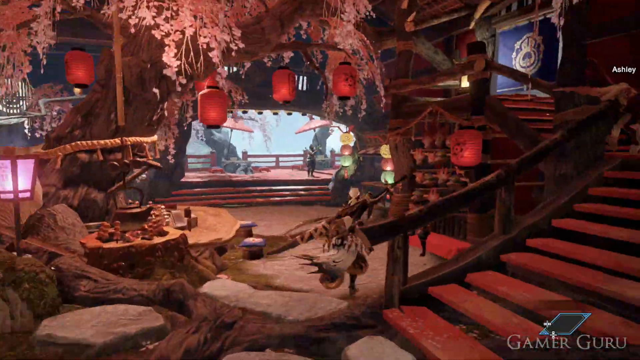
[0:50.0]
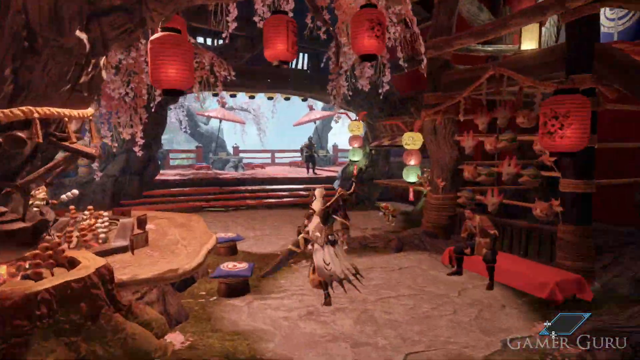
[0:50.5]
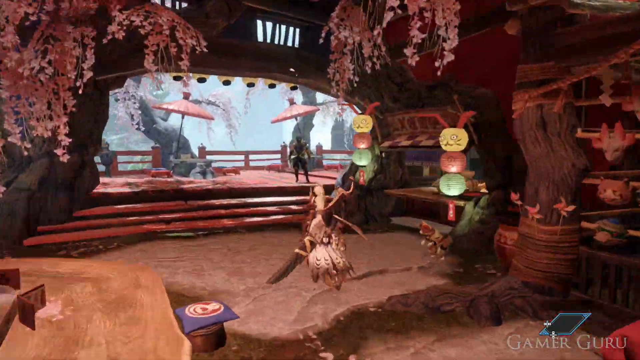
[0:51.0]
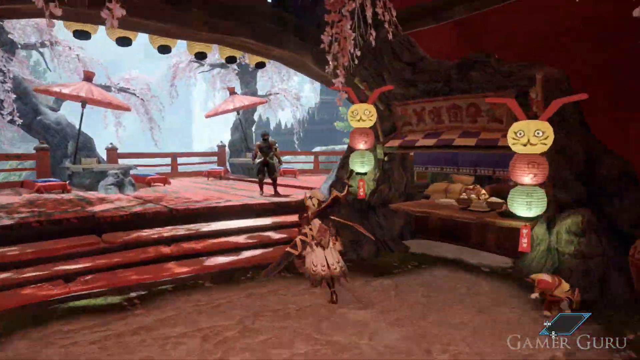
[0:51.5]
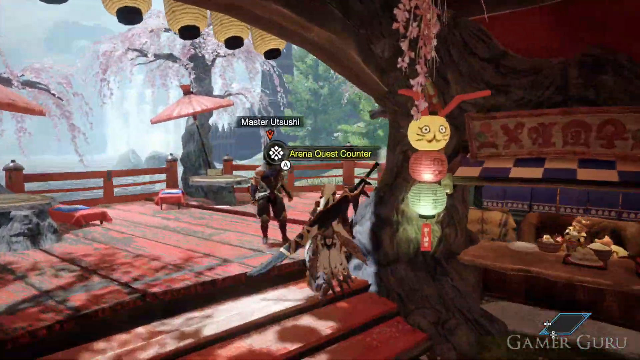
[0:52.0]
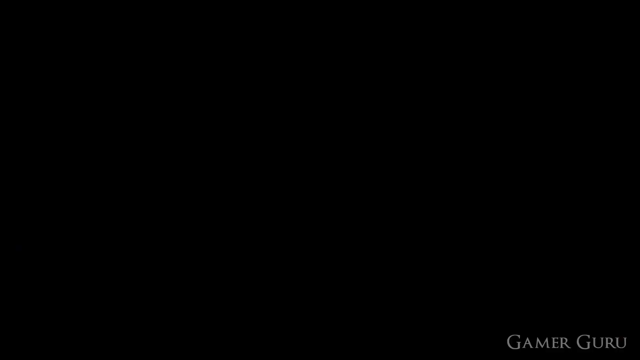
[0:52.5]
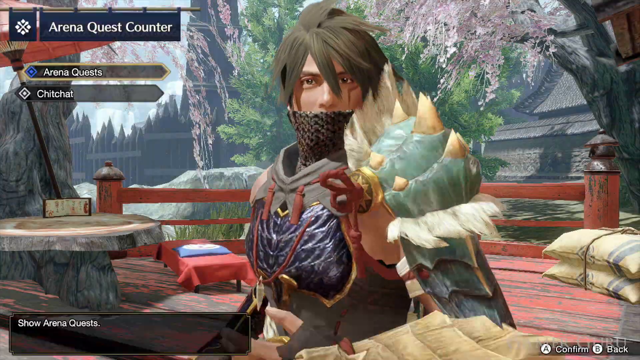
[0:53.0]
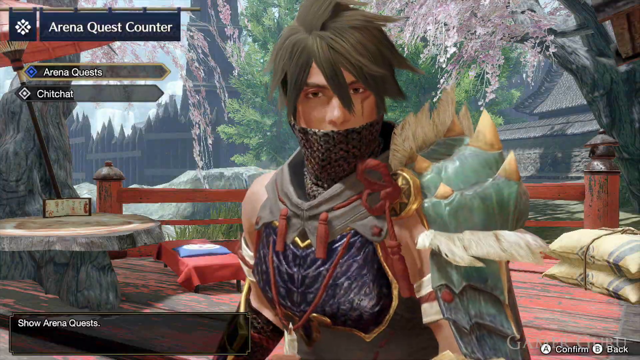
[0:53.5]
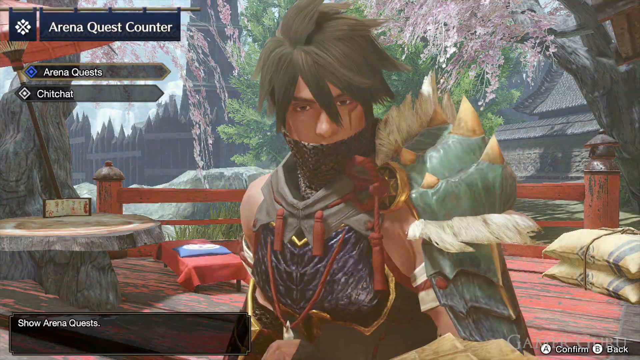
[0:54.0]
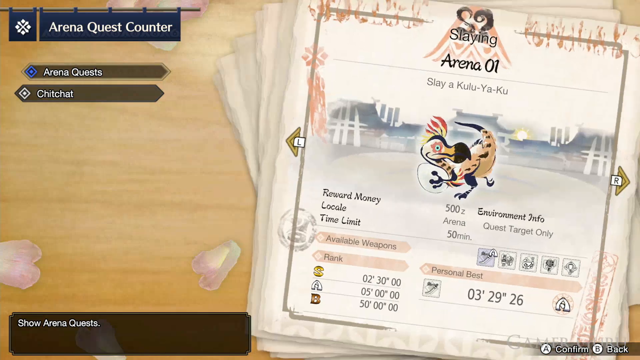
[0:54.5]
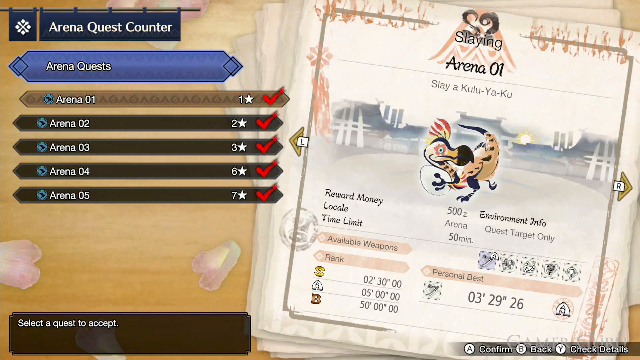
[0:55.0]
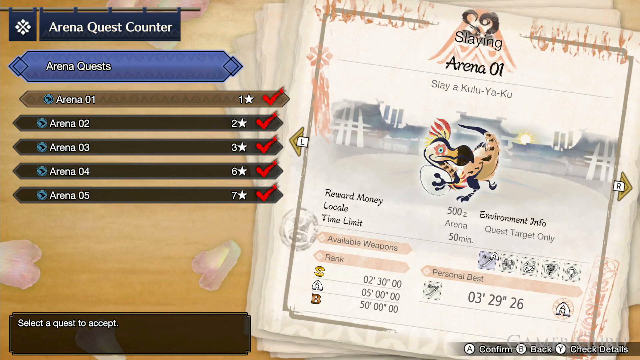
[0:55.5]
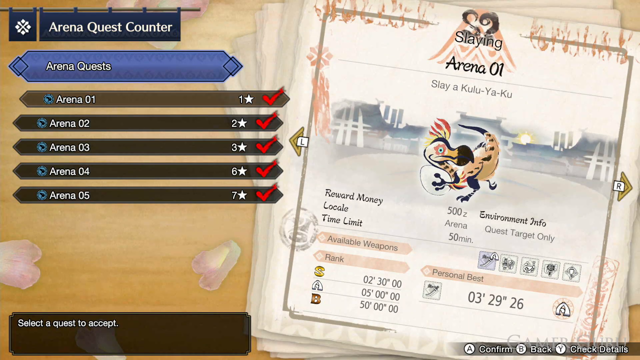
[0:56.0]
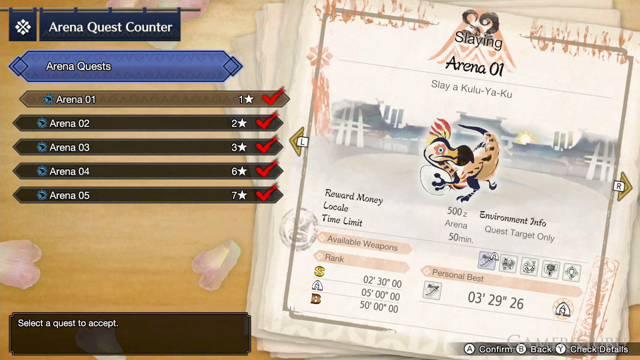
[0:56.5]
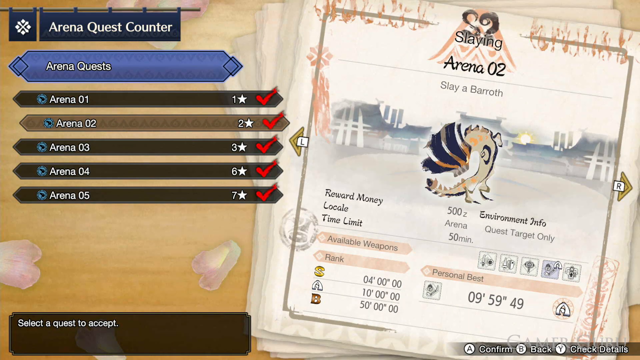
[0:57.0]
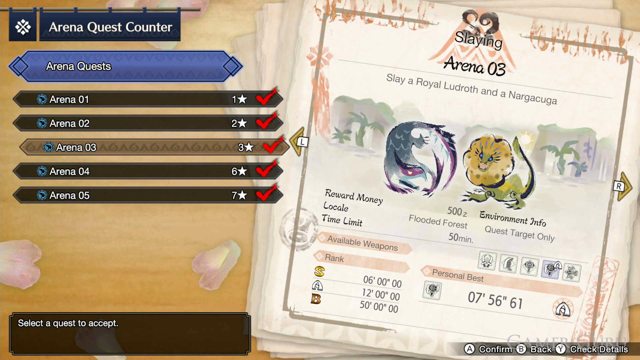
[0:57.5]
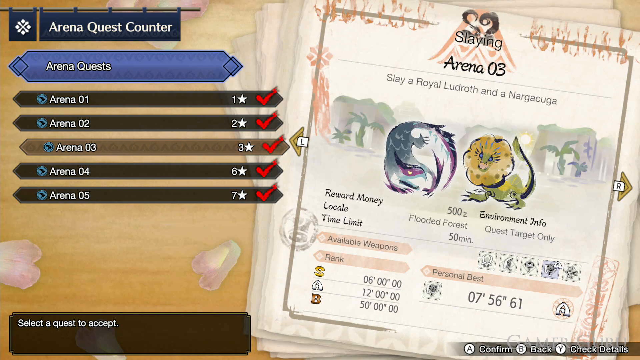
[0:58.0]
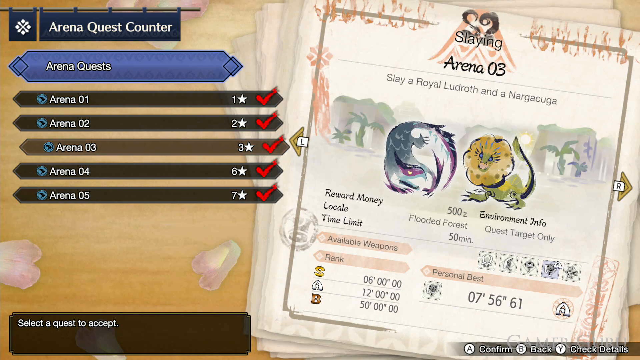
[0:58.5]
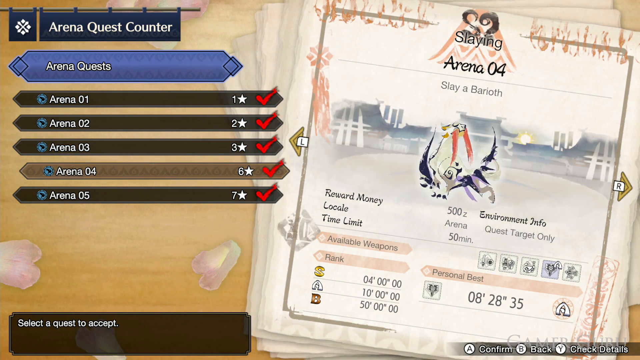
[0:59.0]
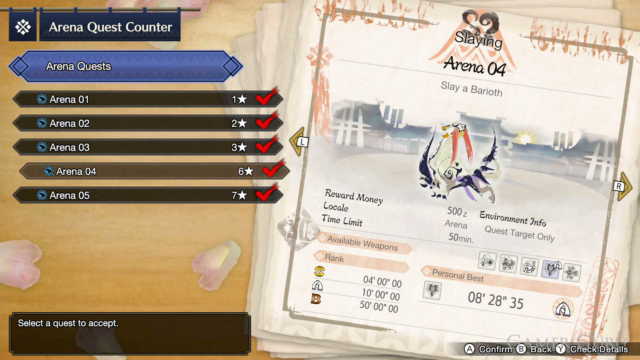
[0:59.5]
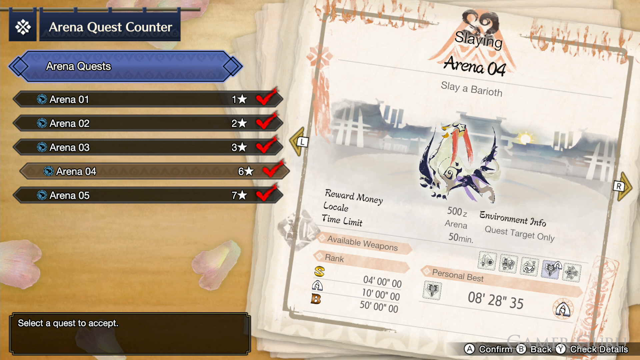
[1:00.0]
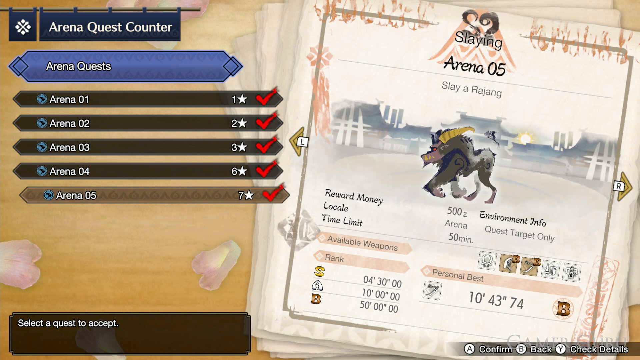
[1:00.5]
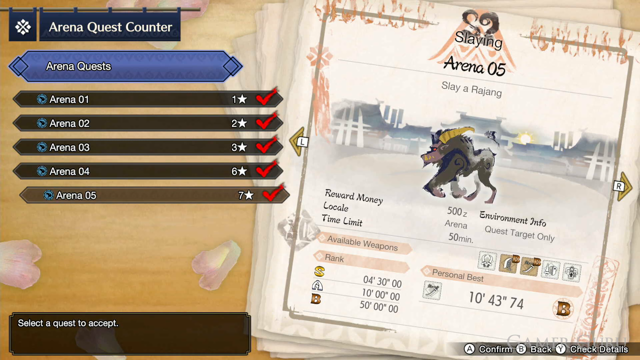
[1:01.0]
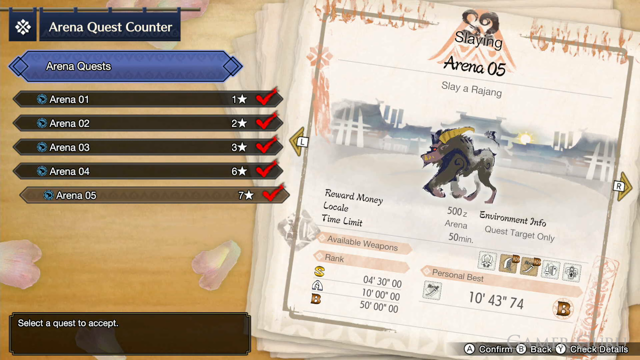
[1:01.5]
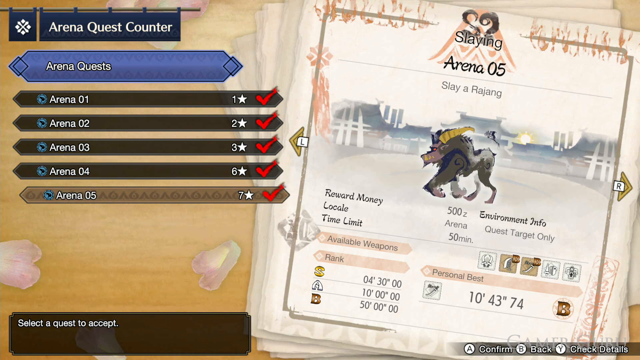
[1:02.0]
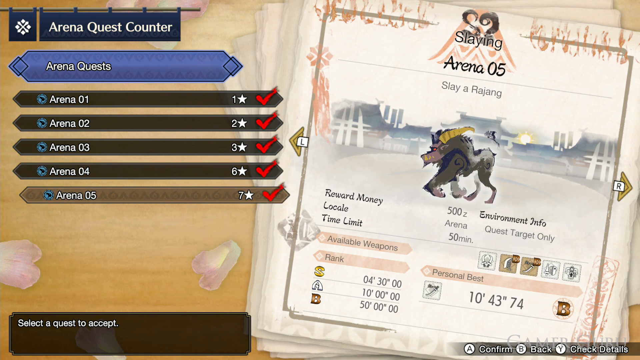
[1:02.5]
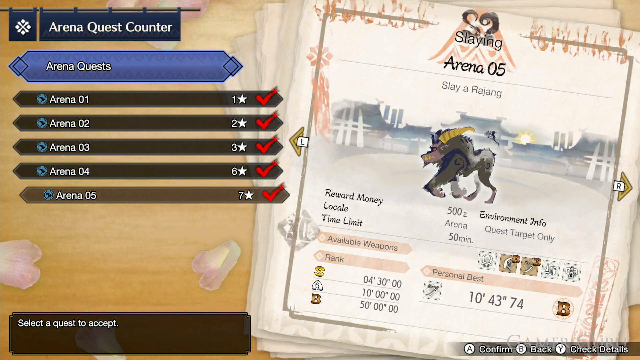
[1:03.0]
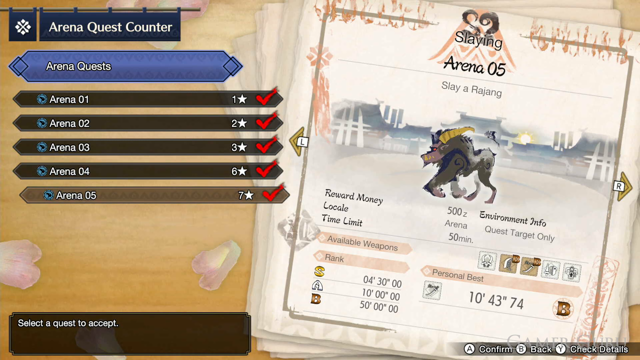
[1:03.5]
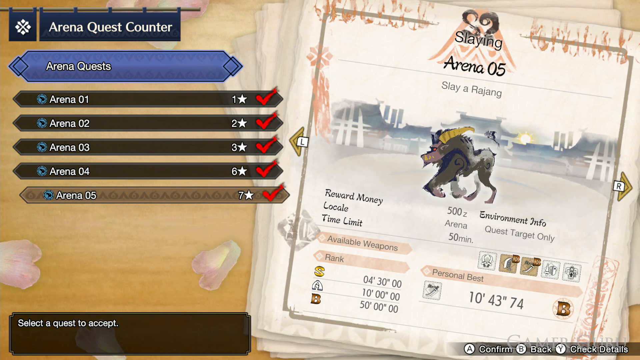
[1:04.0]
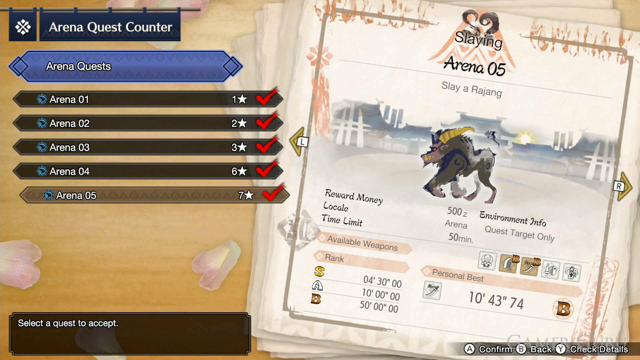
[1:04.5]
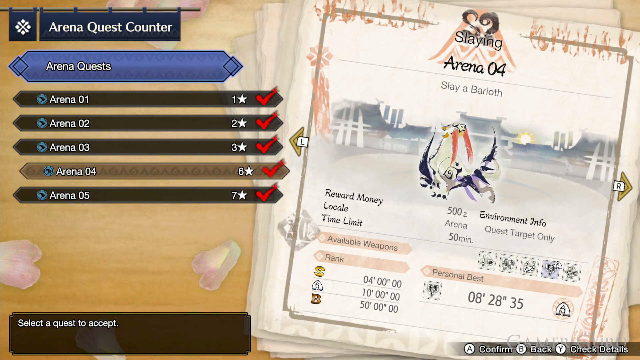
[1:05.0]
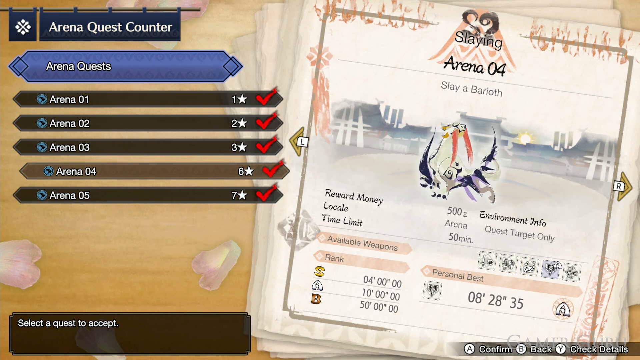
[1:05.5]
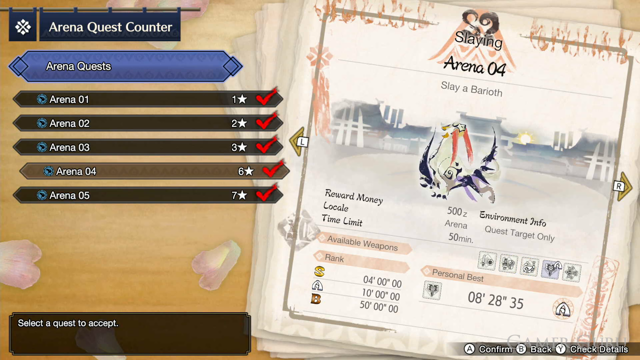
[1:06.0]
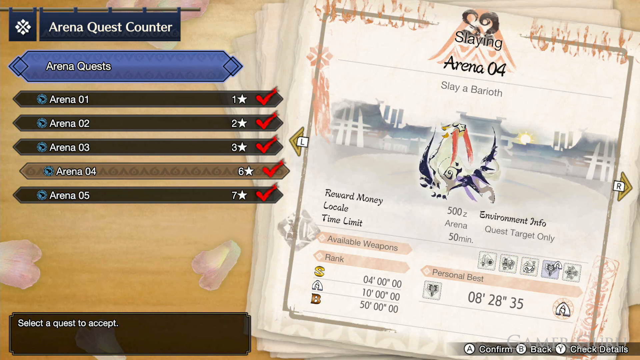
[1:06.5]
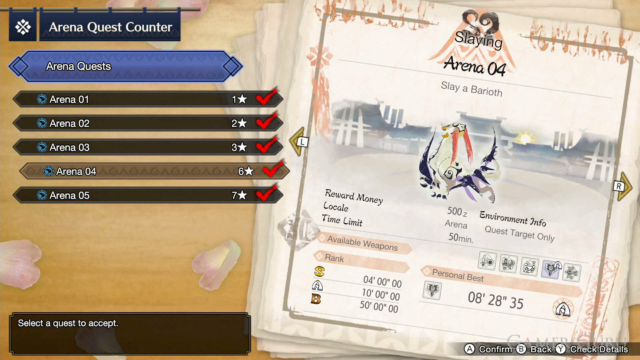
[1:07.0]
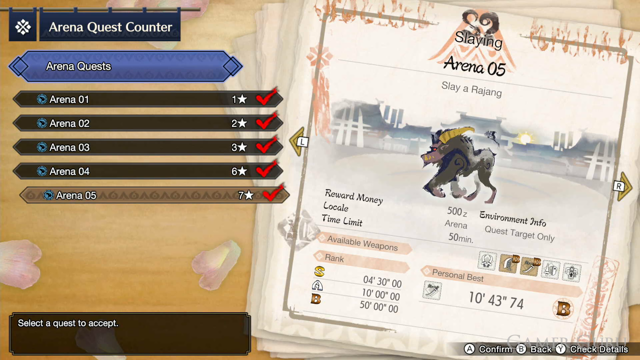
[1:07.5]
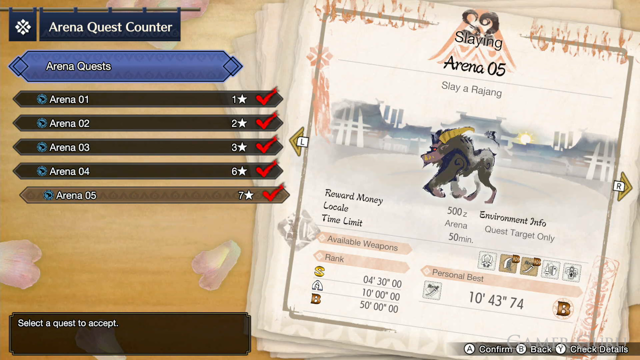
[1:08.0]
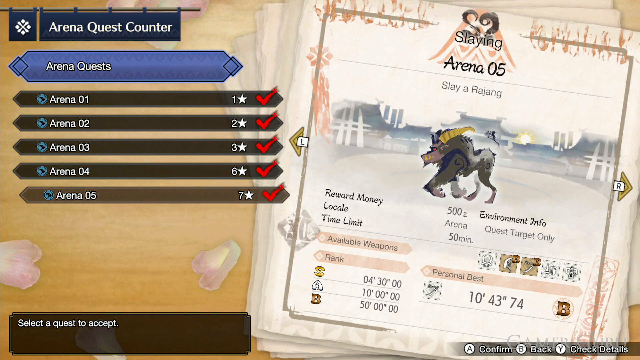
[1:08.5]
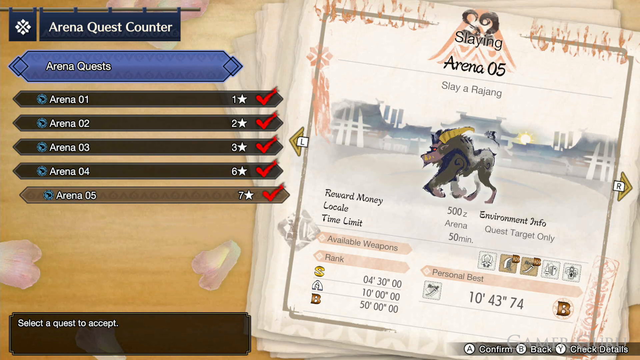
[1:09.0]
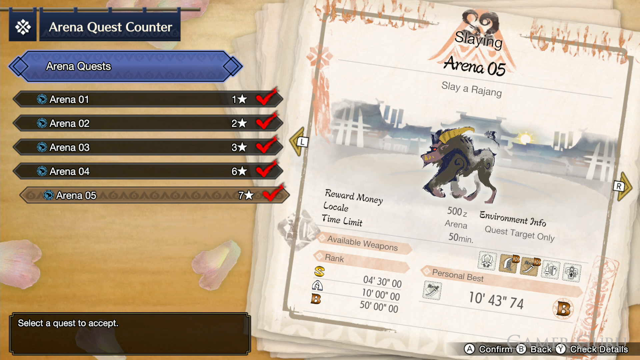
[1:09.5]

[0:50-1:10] A video game scene shows the inside of what looks like a tree house, maybe, with cherry blossoms inside and outside the house or building. A character with a sword on their back is near a stairway with red steps and runs out to what looks like a balcony or patio. The view switches to a screen with "arena quest counter" in white letters on a blue banner at the top left. It lists arena quests: Arena 1 with one star, Arena 2 with two stars, Arena 3 with three stars, Arena 4 with six stars and Arena 5 with seven stars. On the right it reads "Slaying Arena 2, Slay a Barroth," with what appears to be reward money of 500 Z, locale "arena," time limit 50 minutes, and environment info "quest target only."